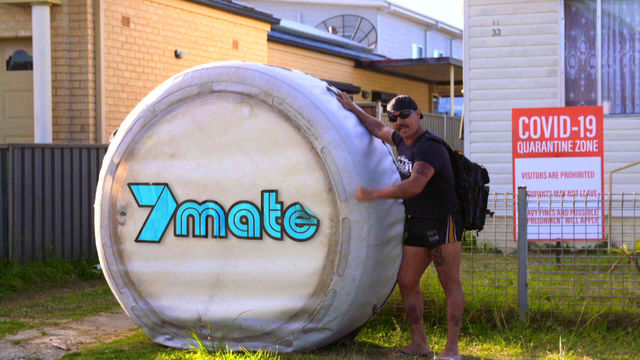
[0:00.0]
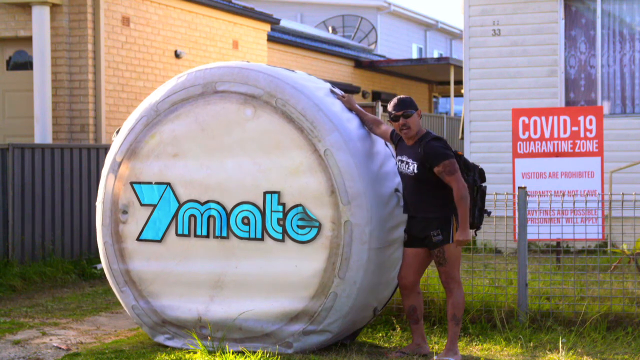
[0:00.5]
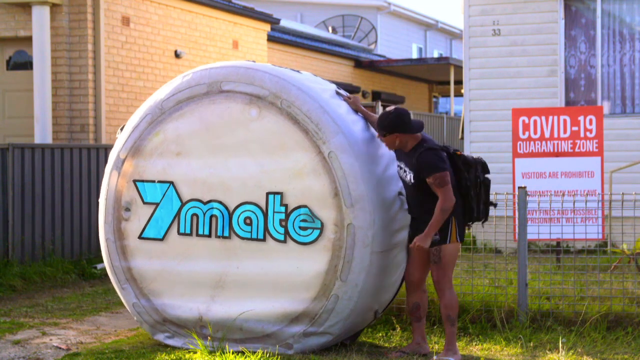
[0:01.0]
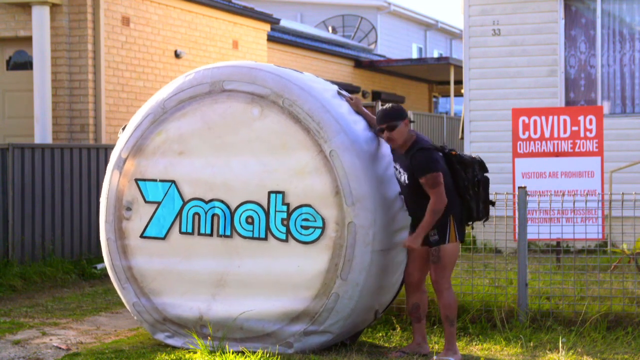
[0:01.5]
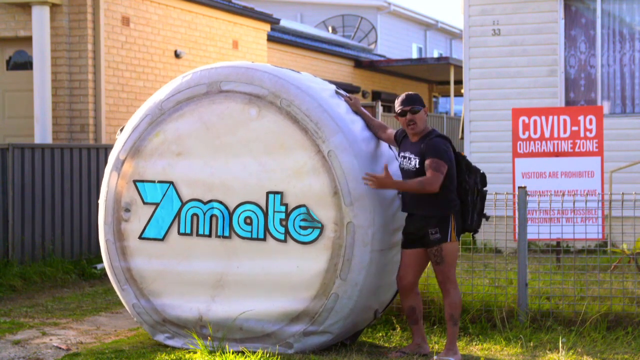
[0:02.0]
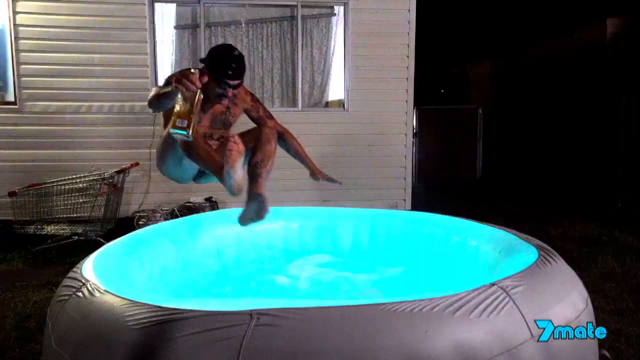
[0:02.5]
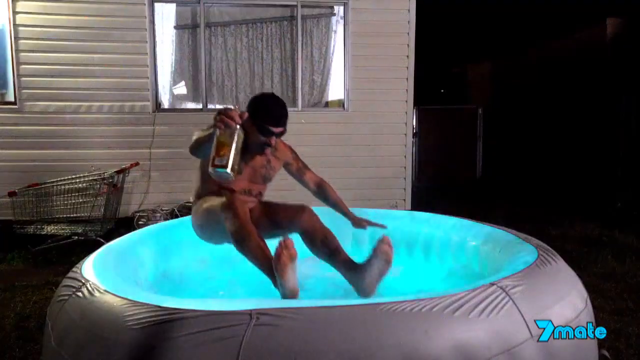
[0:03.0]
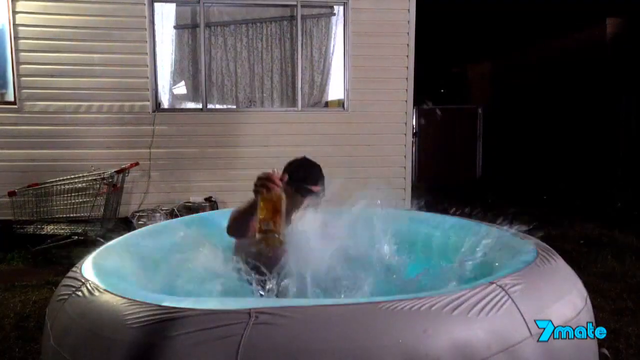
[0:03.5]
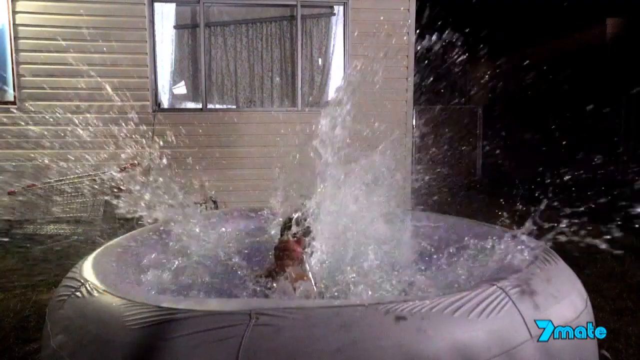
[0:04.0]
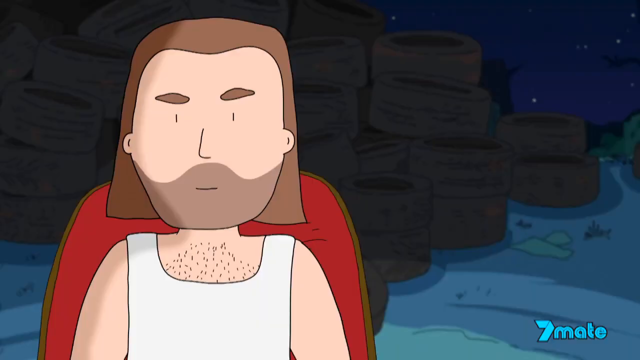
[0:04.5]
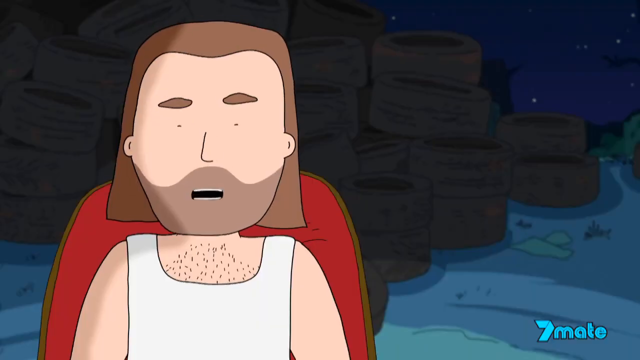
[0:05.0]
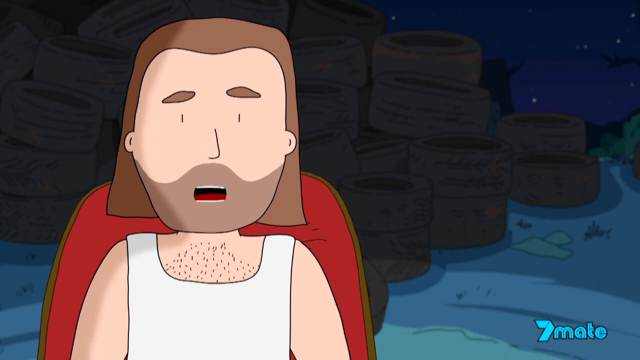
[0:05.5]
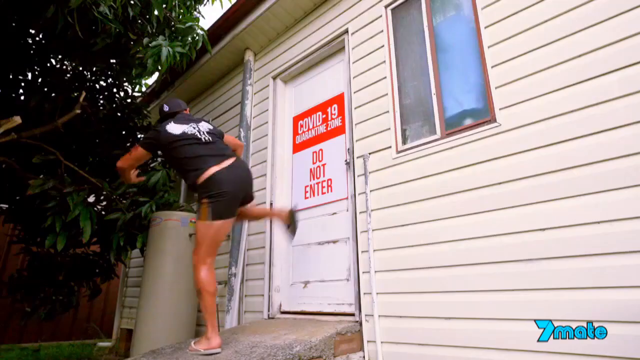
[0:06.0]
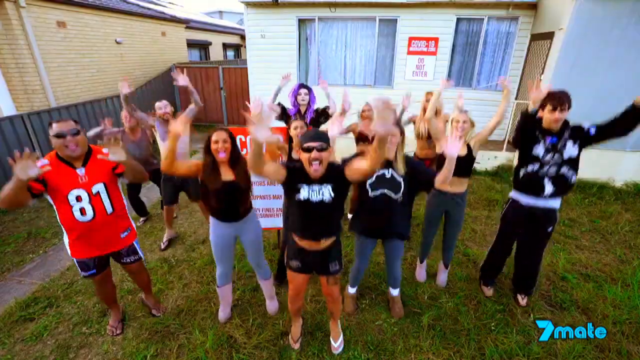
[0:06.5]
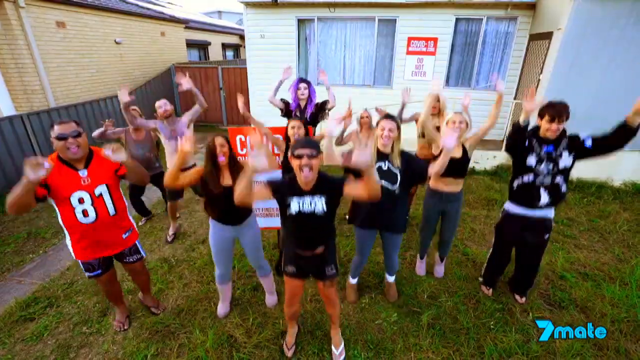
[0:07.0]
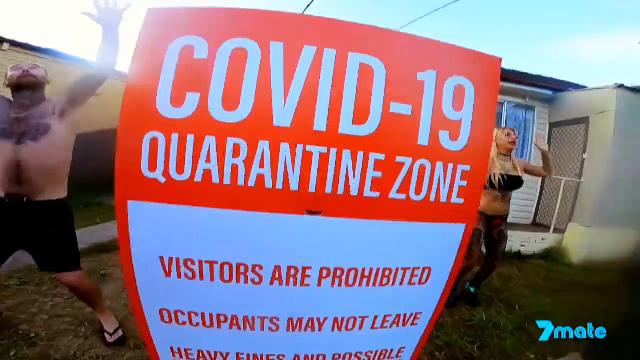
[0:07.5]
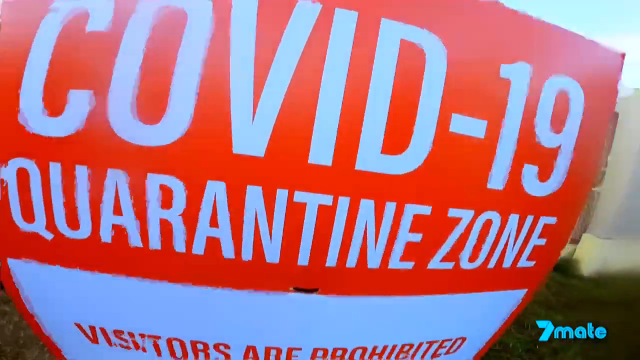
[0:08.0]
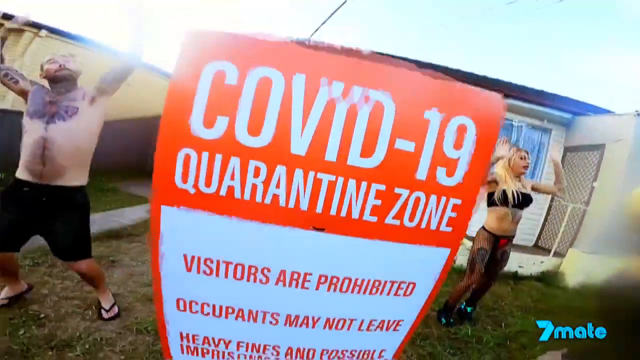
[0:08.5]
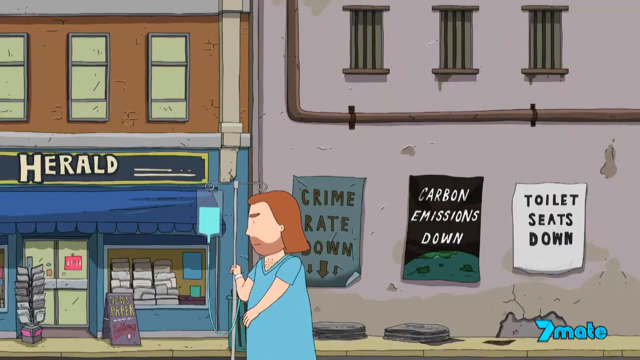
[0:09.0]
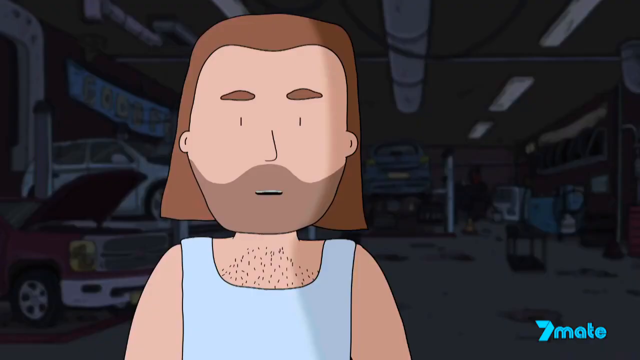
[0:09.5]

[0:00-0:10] A man in a black shirt and black shorts holds up an inflatable pool. The scene fades to the pool, and a shirtless man in shorts holding a bottle of some type jumps into it. Next comes a cartoon of a brown-haired man in a white t-shirt with a red background behind his shoulders. This fades to the first man kicking in a door that says "COVID-19 quarantine zone, do not enter." As he kicks it in, multiple people appear in the same yard as at the beginning: thirteen people, five men and eight women, jumping up and down. The video then flashes to the cartoon man pushing an IV down the street.